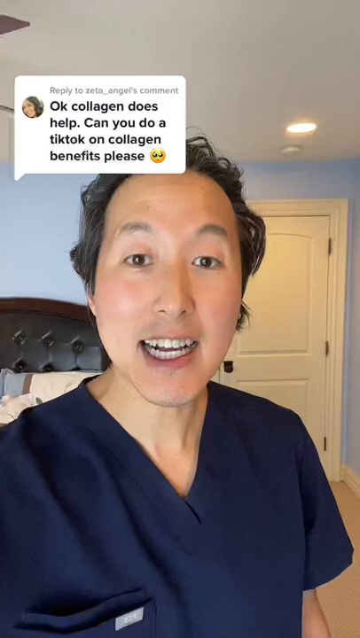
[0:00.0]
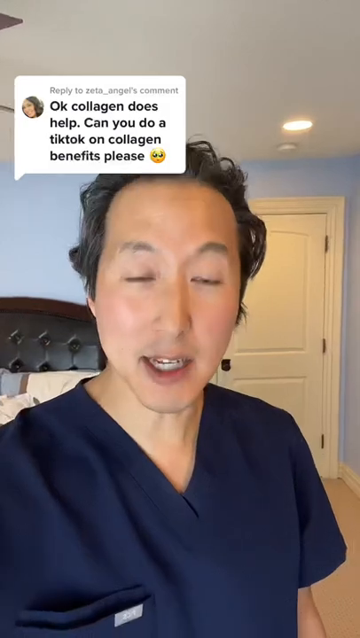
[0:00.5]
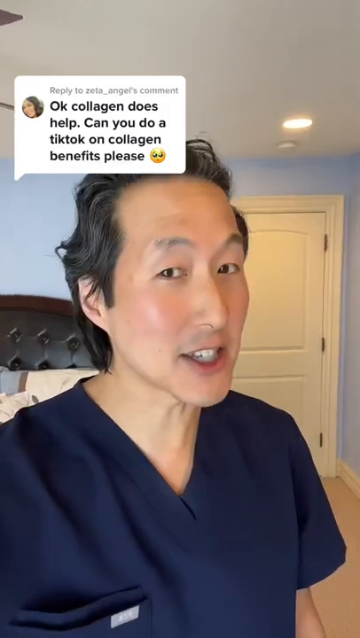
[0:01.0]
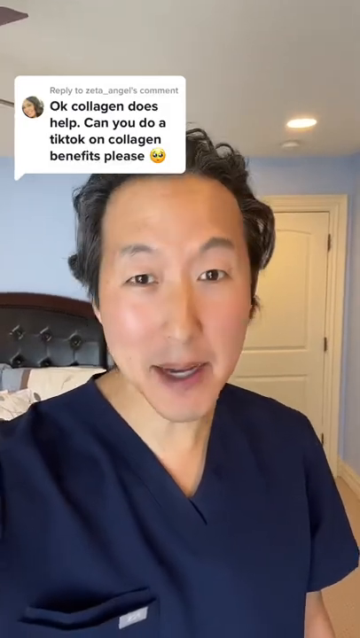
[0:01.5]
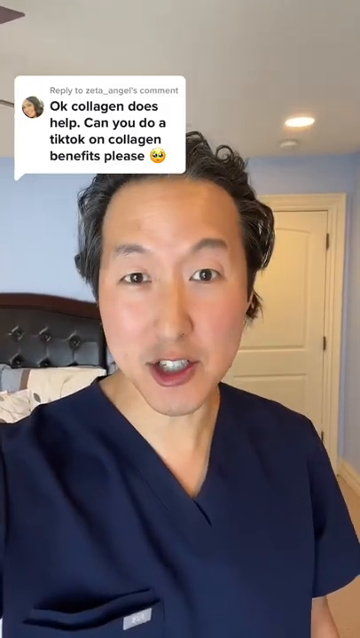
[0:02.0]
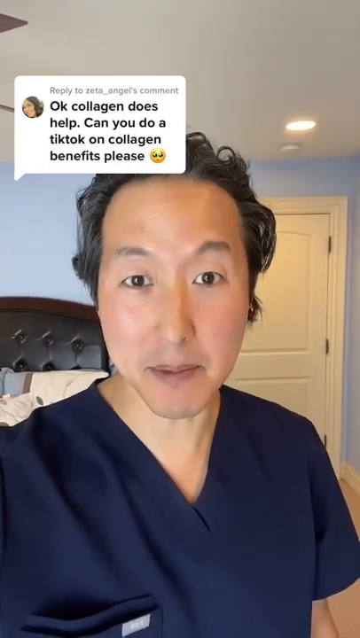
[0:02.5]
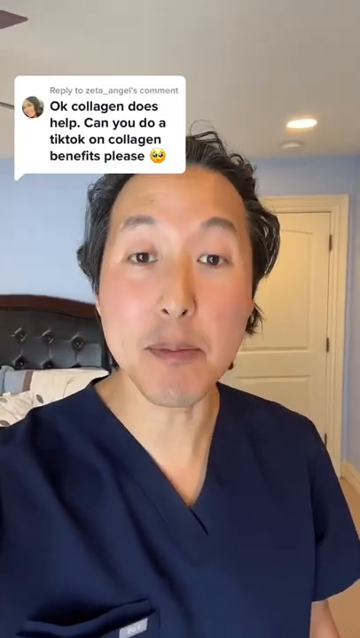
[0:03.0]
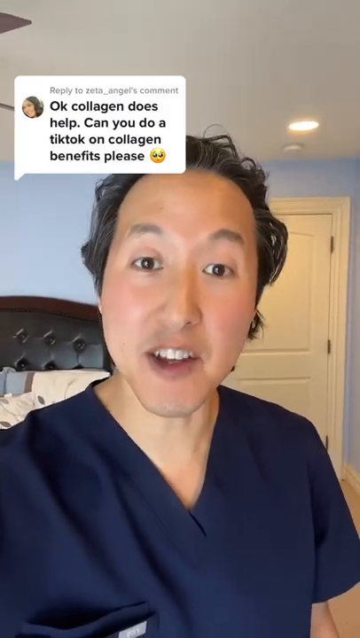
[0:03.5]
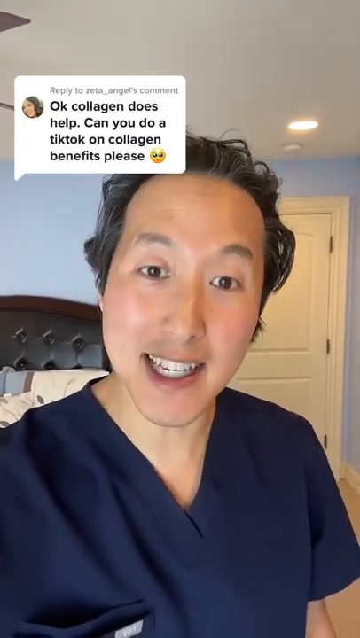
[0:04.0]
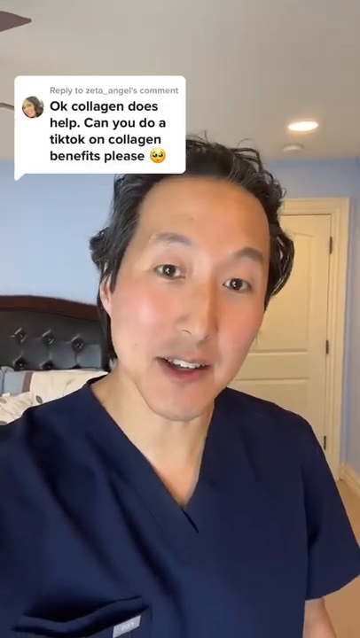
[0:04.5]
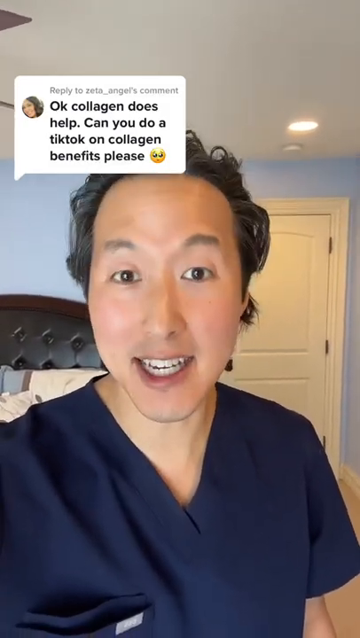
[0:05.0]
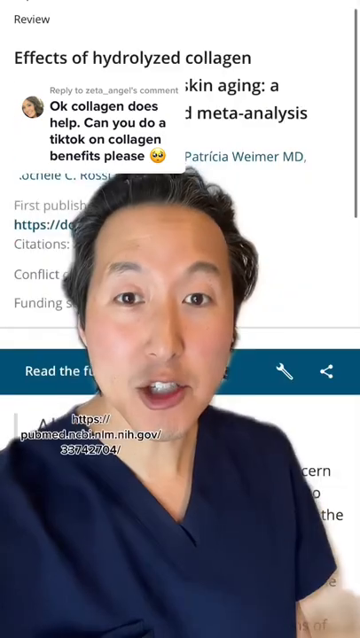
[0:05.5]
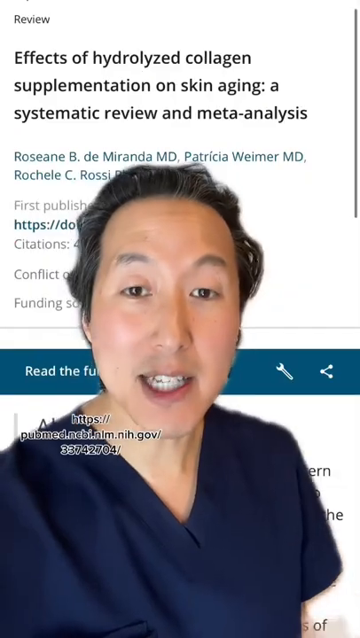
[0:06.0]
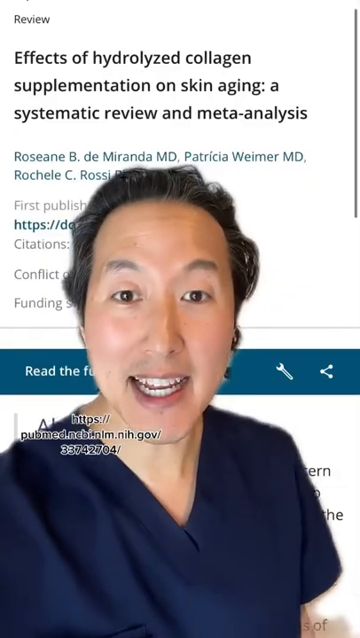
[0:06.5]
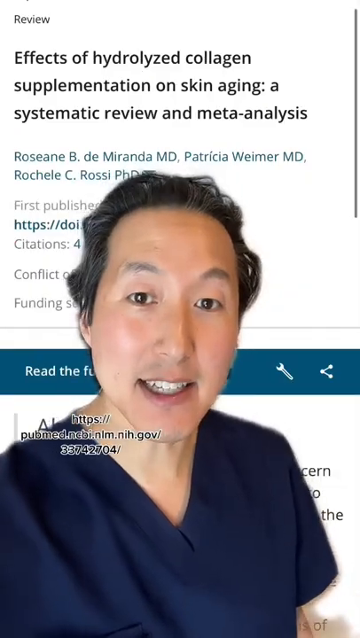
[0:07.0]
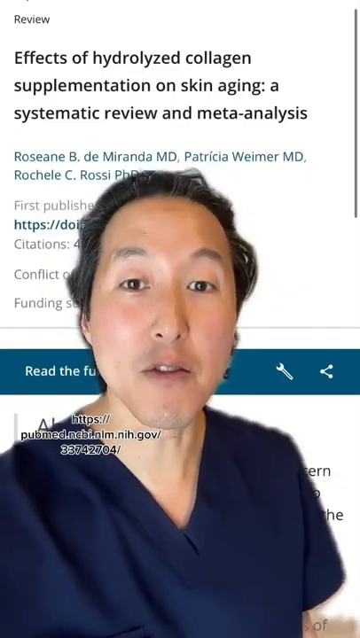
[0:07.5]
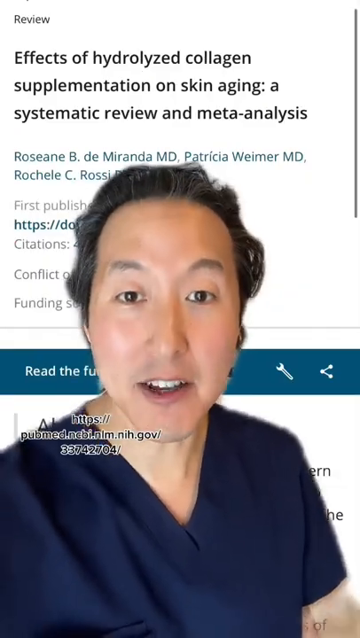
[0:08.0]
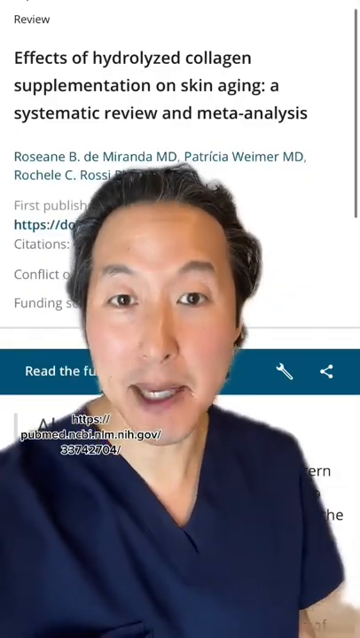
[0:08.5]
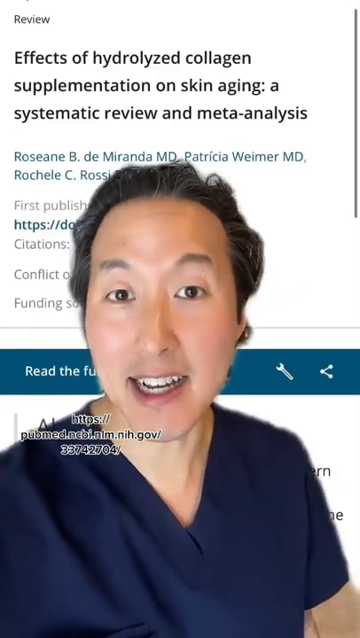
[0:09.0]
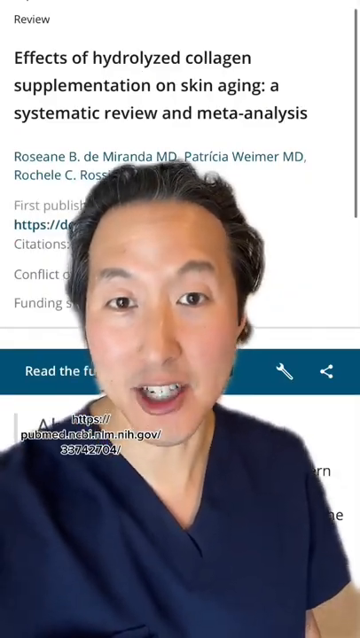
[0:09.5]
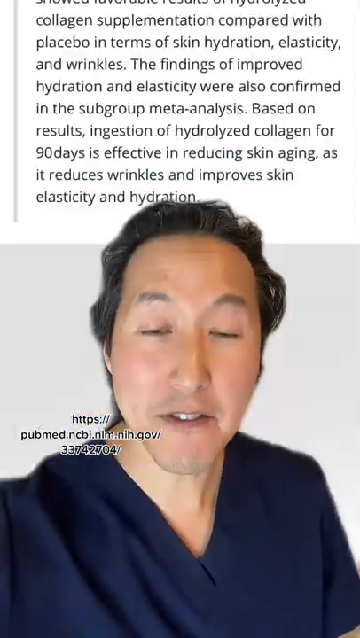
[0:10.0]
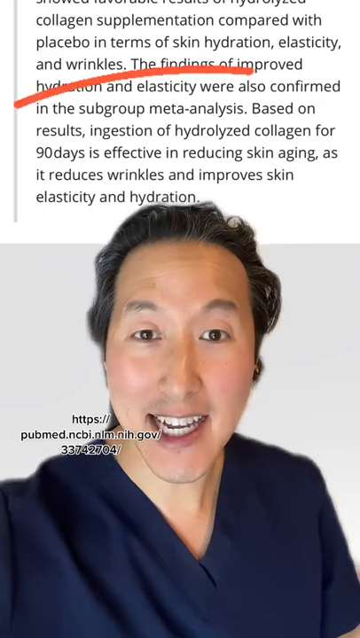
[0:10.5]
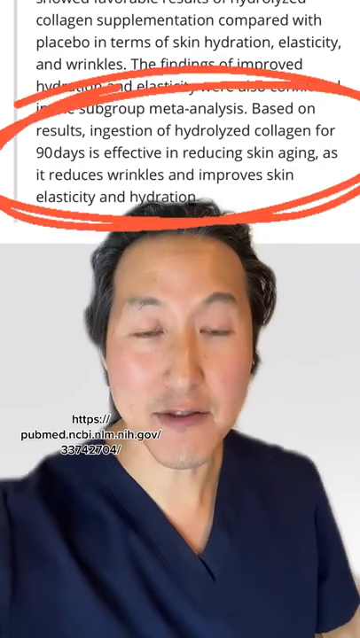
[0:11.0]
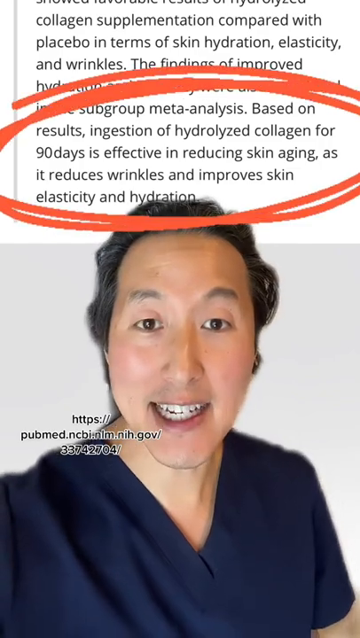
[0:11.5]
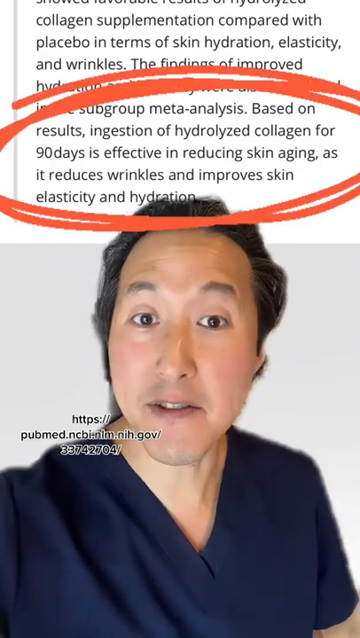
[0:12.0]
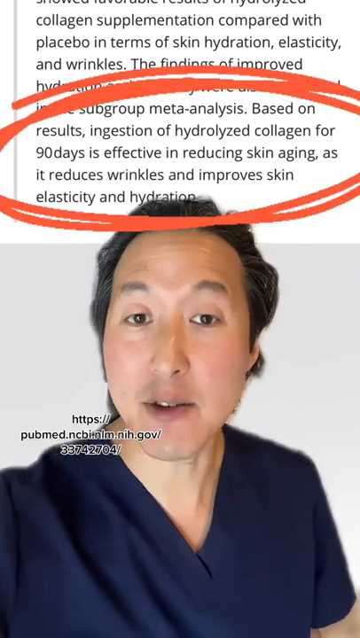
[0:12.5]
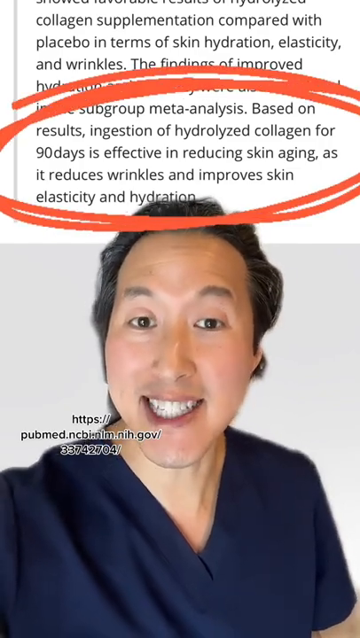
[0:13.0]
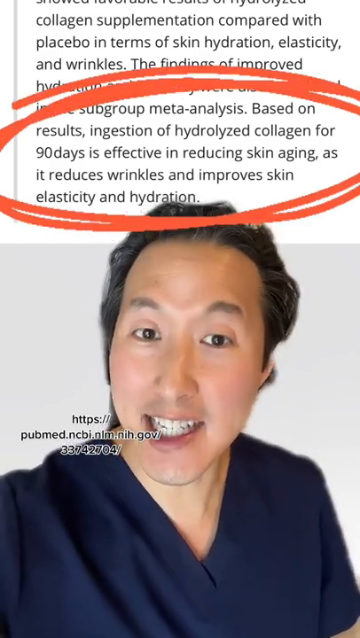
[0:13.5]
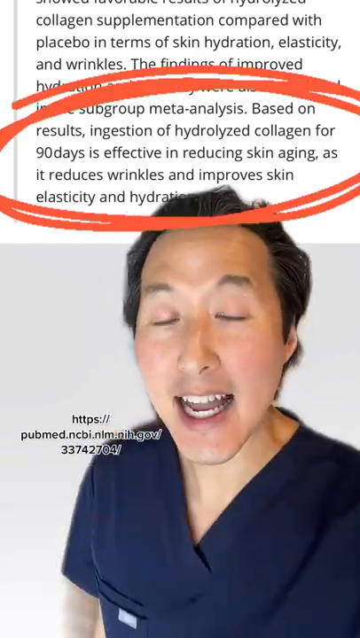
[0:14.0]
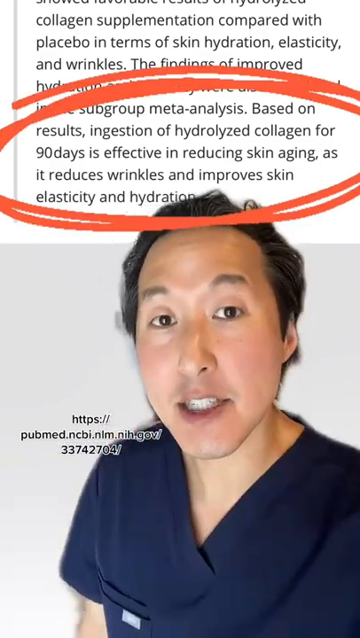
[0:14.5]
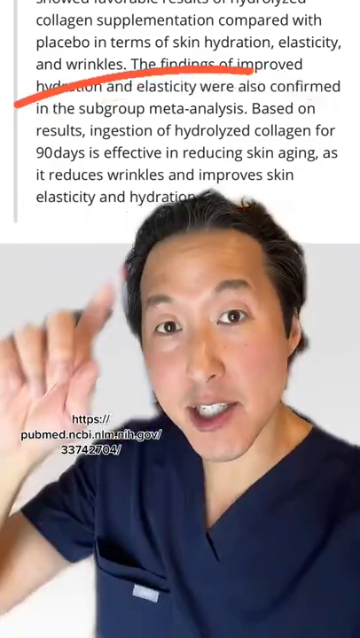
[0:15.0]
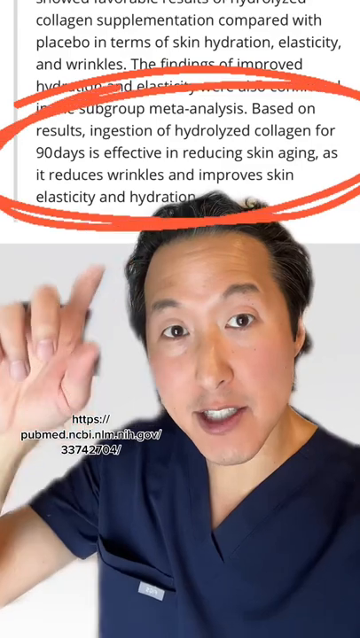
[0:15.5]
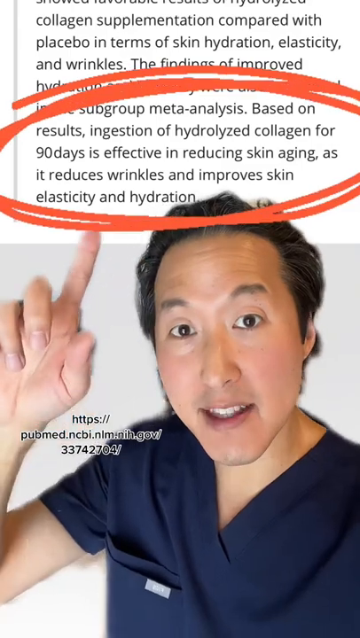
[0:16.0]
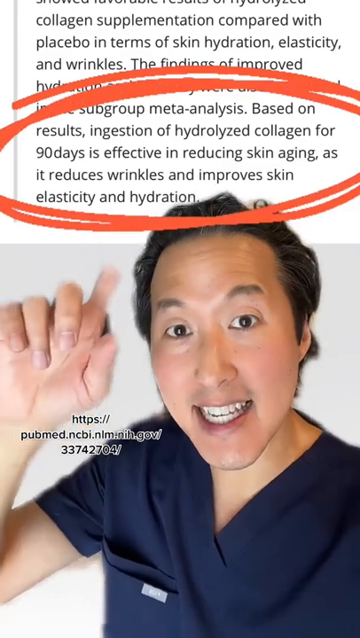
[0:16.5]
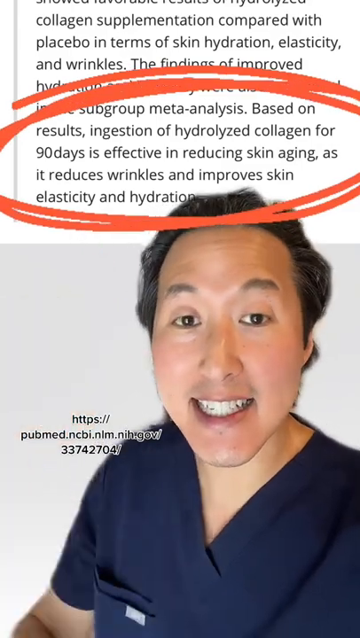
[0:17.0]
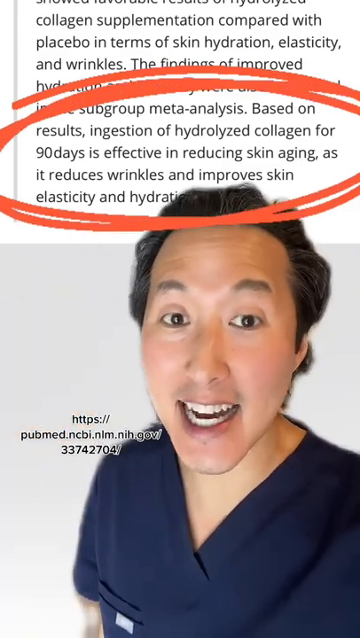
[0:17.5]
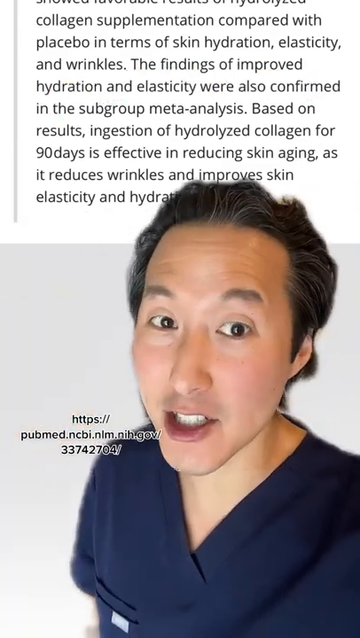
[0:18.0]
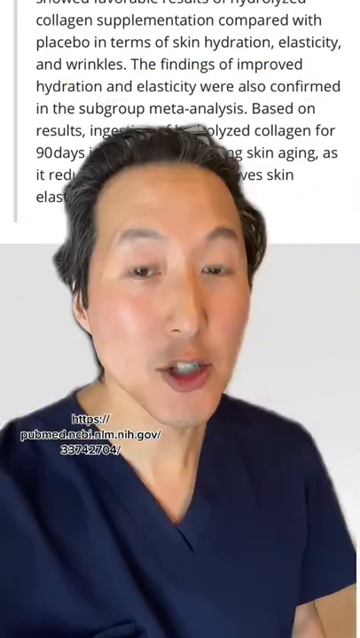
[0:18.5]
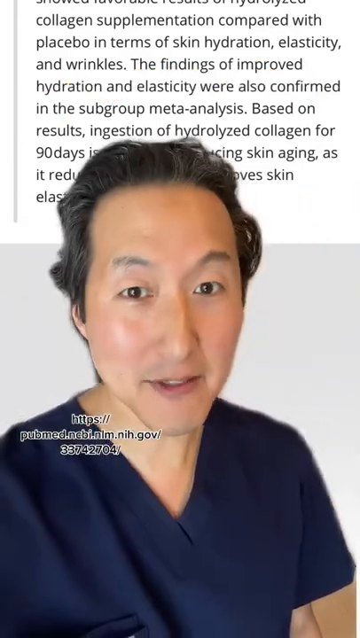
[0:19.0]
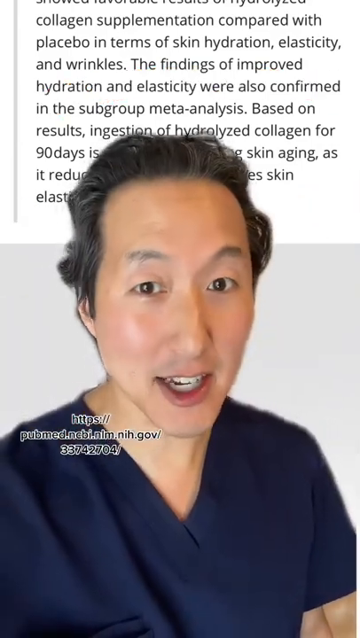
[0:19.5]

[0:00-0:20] A doctor replies to a comment from a user named zeta_angel that reads "Okay, collagen does help. Can you do a TikTok on collagen benefits please?" He is in what seems to be his bedroom, with a bed in the back that has pillows on top, and the bedroom door is closed. A screen is projected behind the doctor showing an article whose title includes the words "on skin aging in systematic review and meta-analysis," and a link to the article is provided. Information stating that the ingestion of hydrolyzed collagen for 90 days is effective in reducing skin aging is circled, along with information that collagen reduces wrinkles and helps with skin elasticity and hydration.